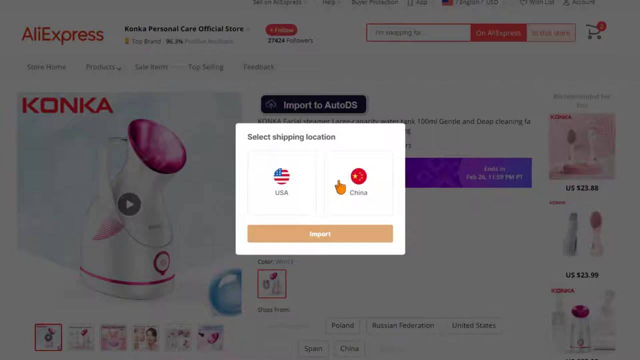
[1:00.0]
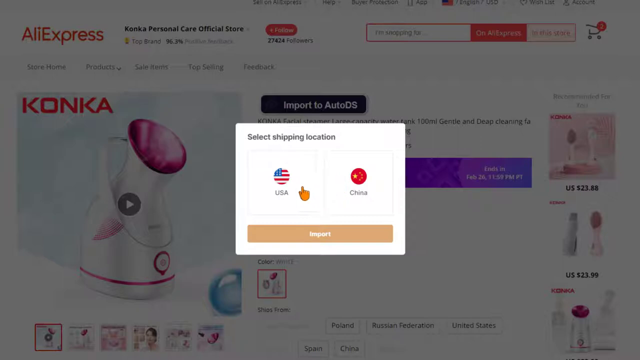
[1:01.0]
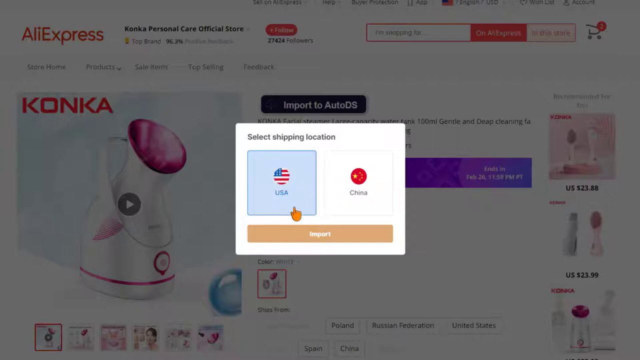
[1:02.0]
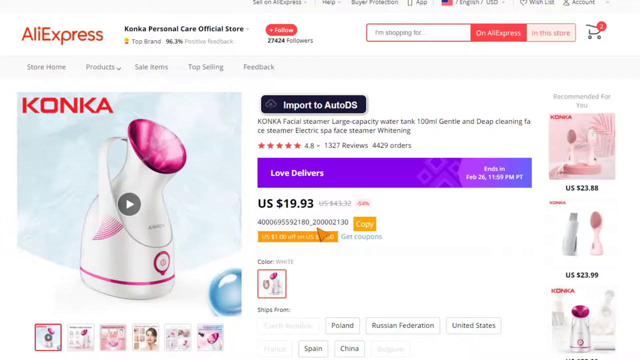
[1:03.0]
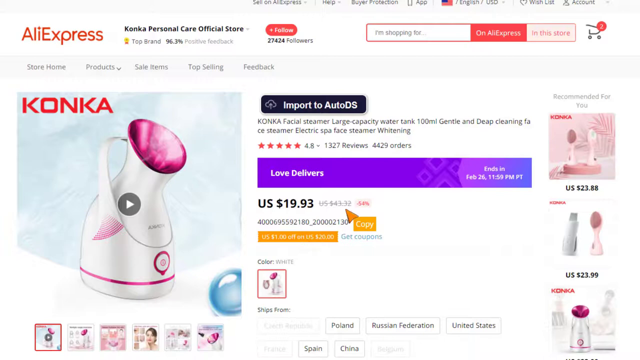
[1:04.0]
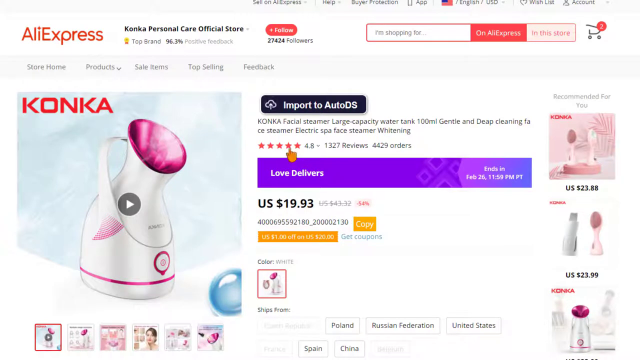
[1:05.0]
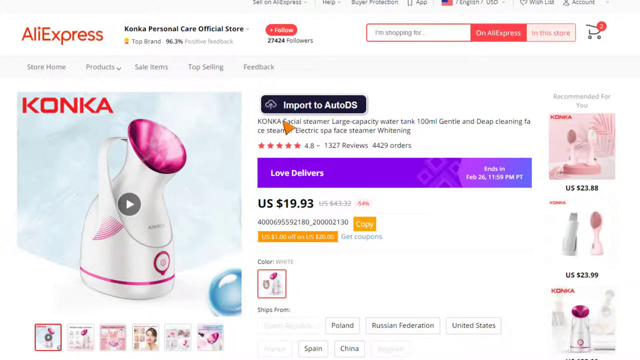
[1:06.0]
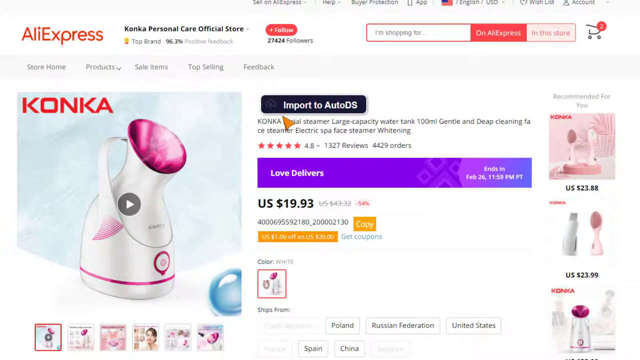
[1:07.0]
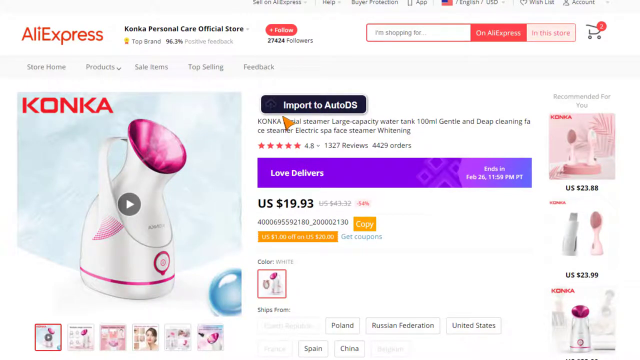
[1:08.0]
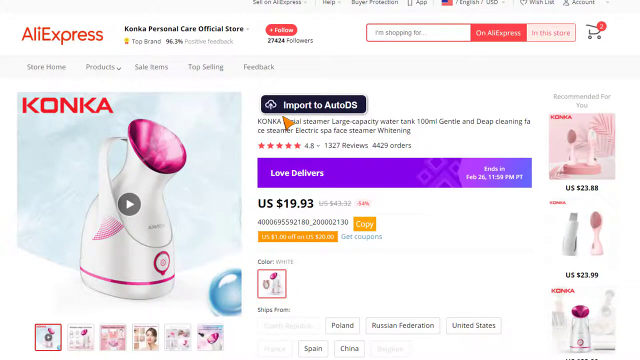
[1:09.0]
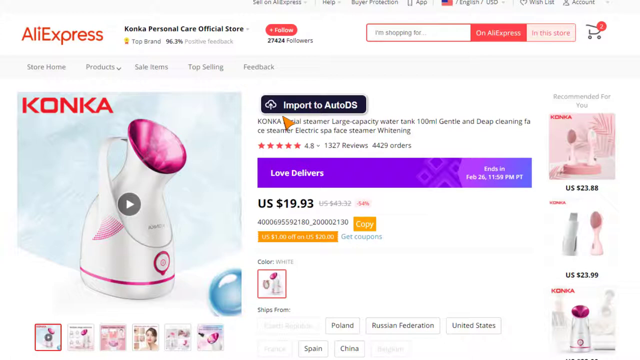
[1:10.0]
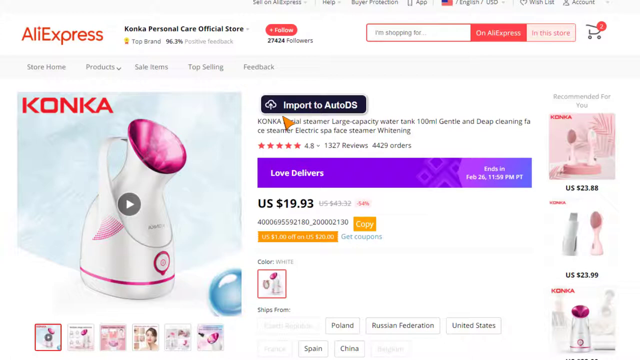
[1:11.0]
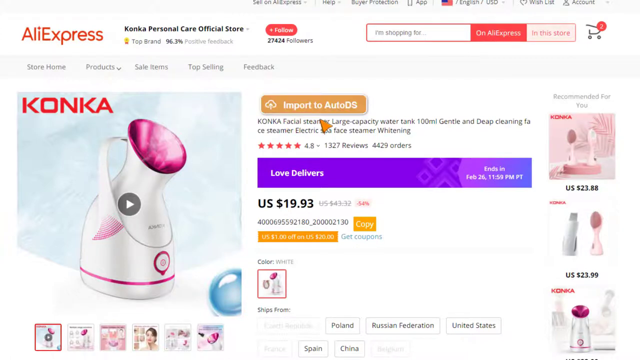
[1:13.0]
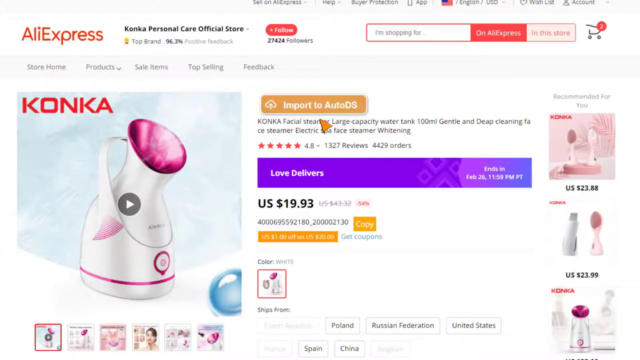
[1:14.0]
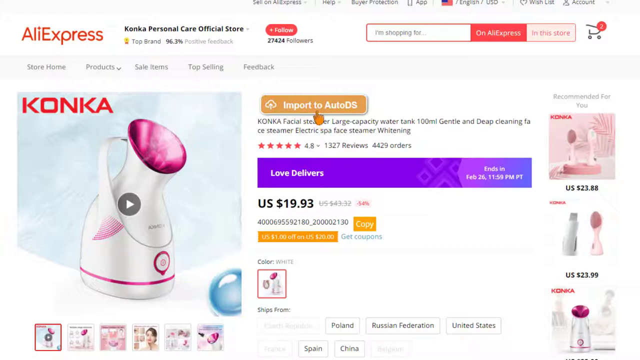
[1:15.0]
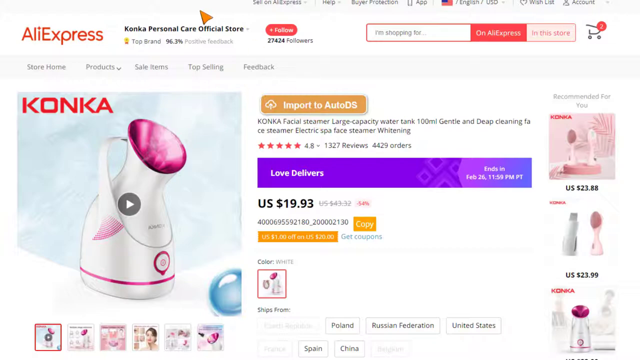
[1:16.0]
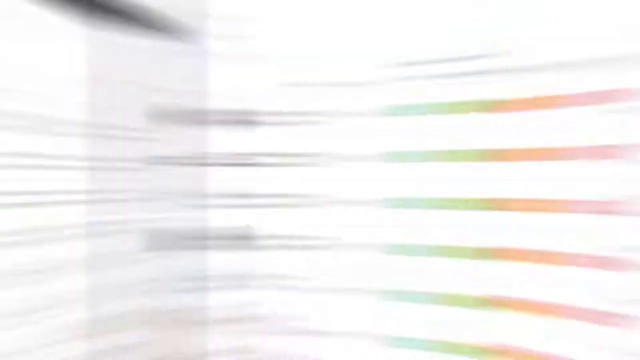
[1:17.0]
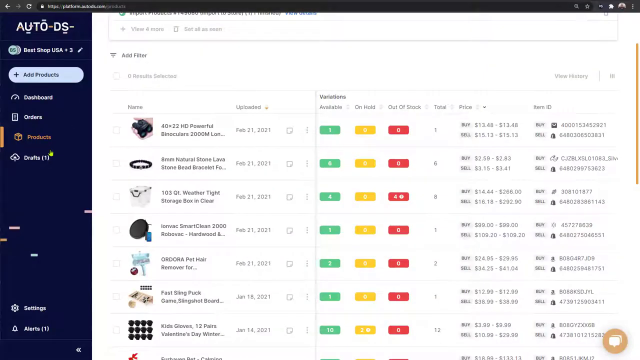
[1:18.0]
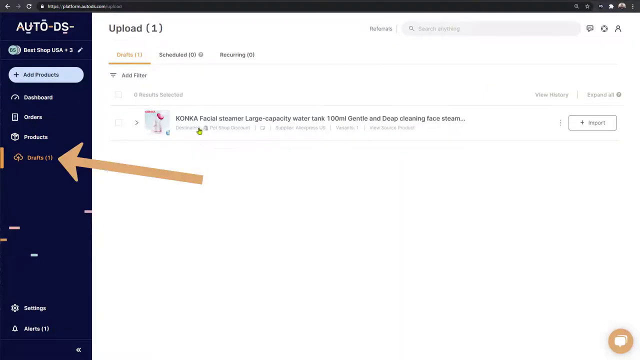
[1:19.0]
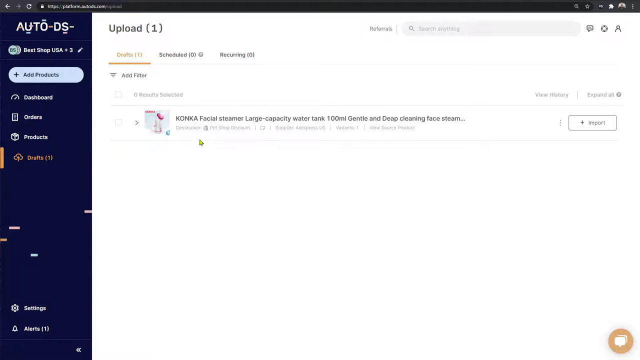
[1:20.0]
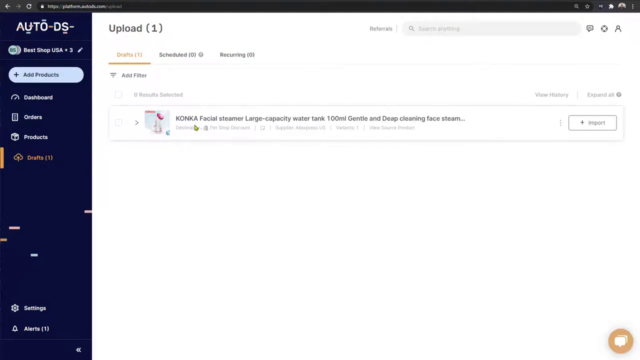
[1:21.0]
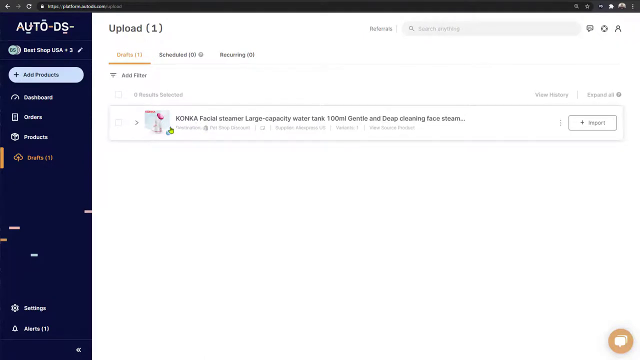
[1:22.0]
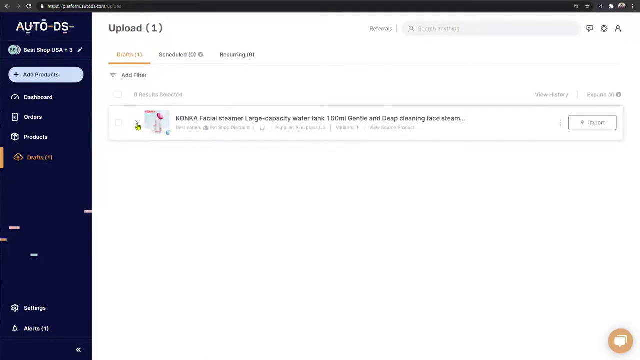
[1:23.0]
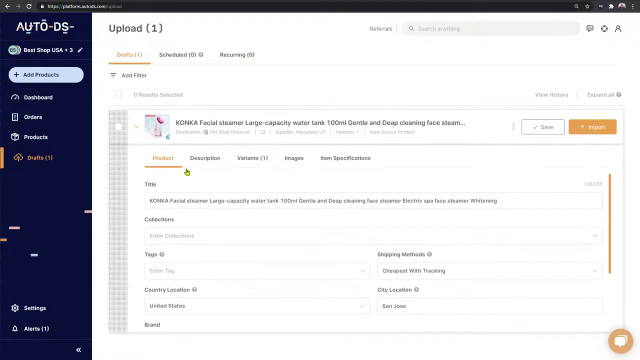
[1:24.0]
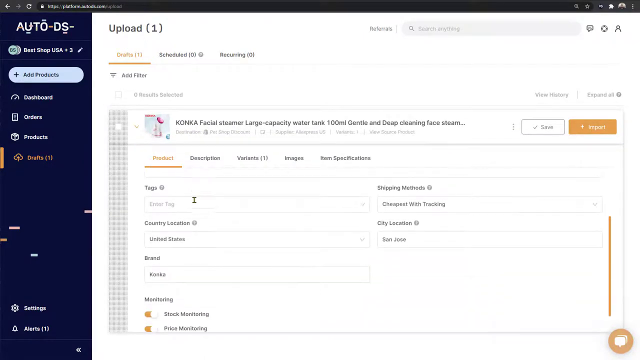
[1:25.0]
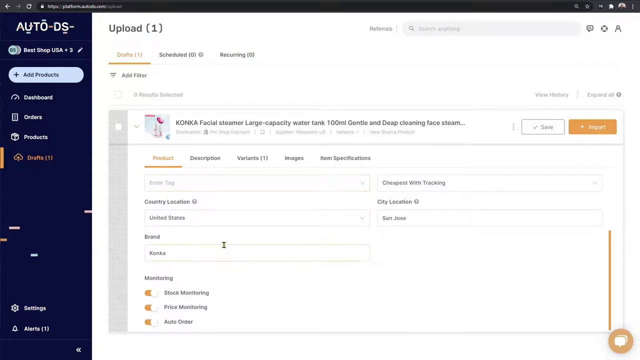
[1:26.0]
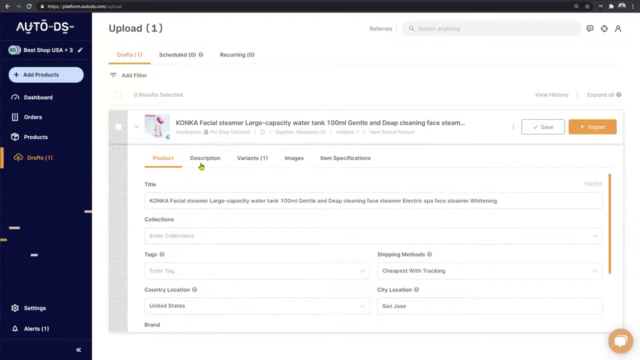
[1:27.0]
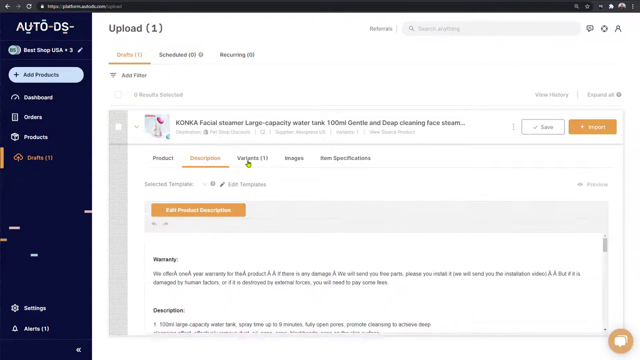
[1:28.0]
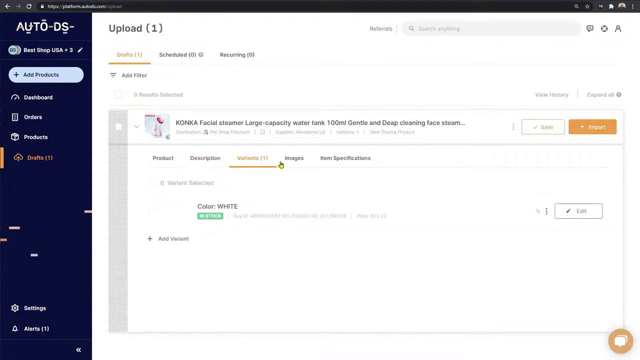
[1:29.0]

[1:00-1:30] The person is in a section labeled "select shipping location," with options for USA and China, and hovers over the "import" button beneath both. They click USA and then import. Above, a link area labeled "import to" flashes, apparently importing the product into the person's store. Back in the store area, an arrow points to another link, and the exact product image is already imported into the store. The person clicks on it, showing that everything was imported where they wanted it.